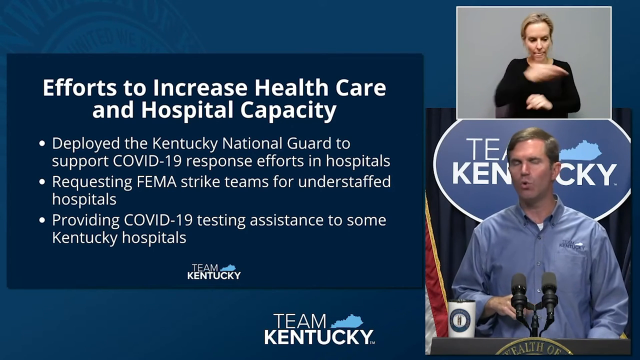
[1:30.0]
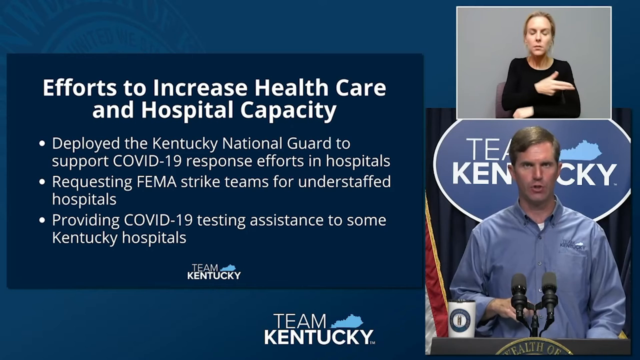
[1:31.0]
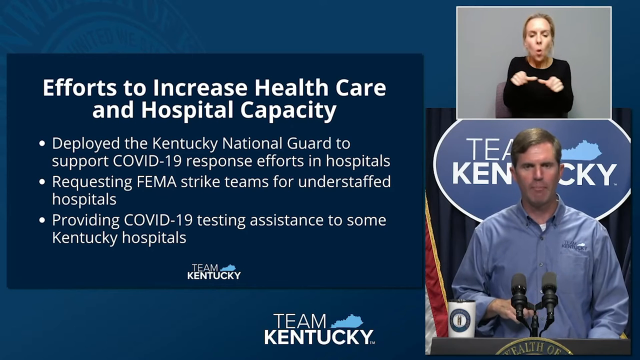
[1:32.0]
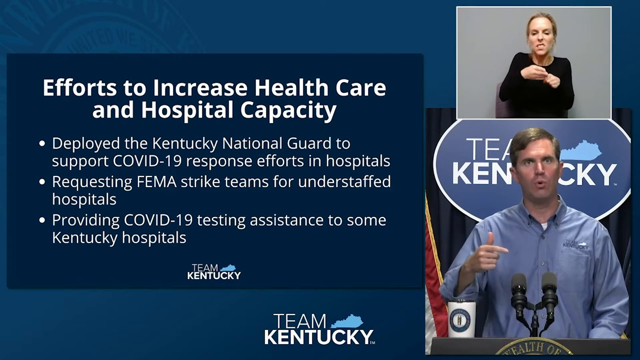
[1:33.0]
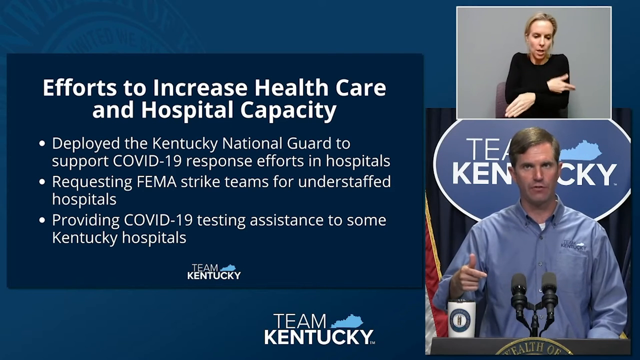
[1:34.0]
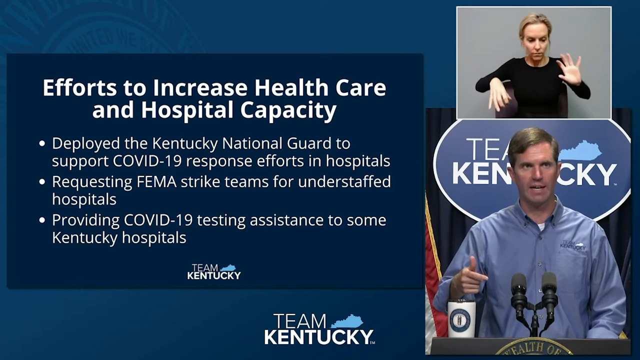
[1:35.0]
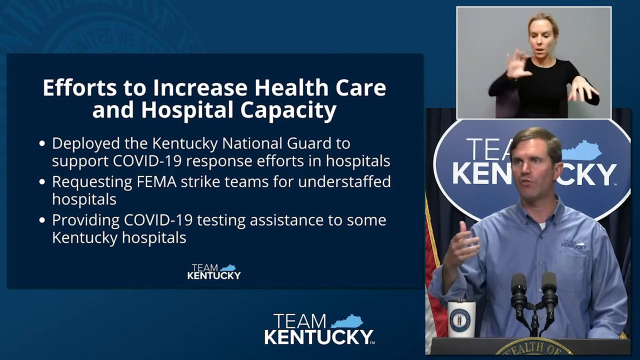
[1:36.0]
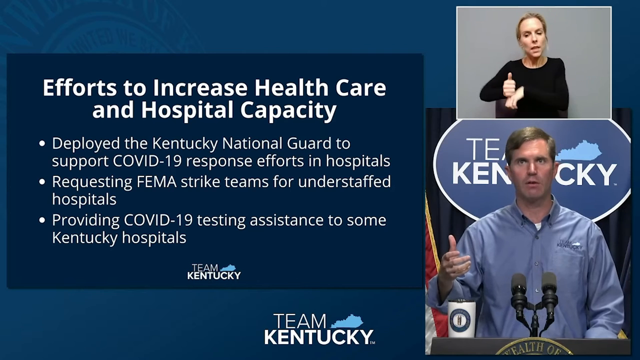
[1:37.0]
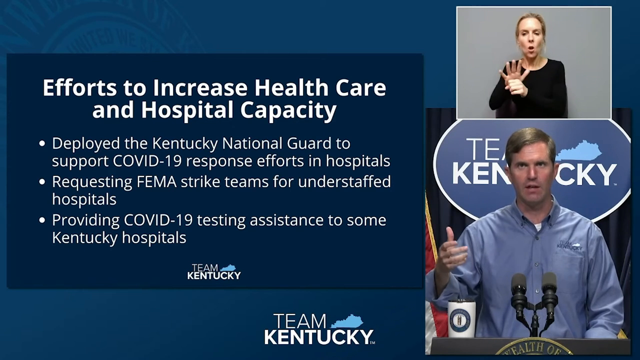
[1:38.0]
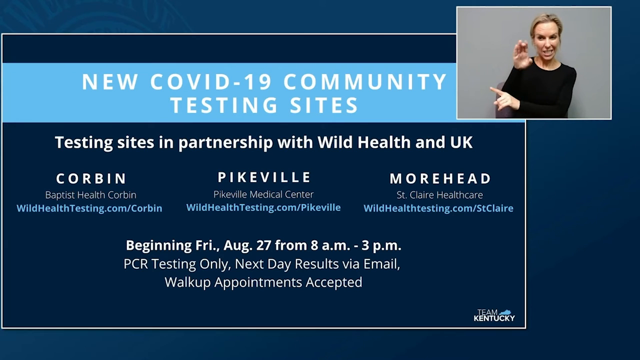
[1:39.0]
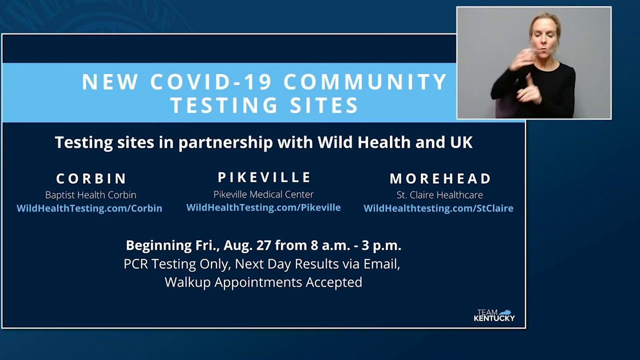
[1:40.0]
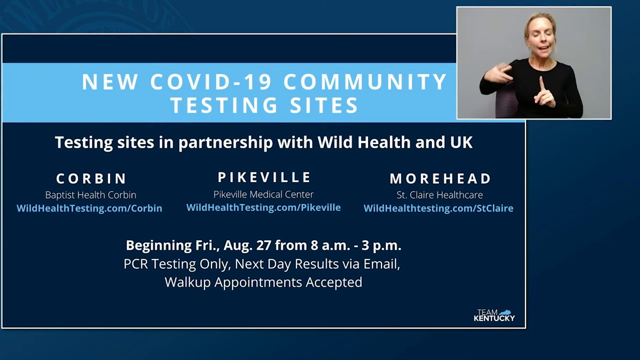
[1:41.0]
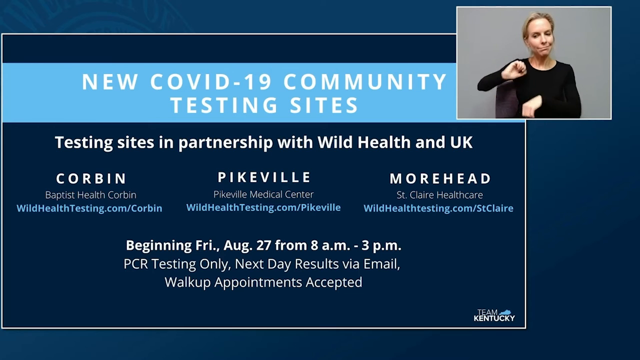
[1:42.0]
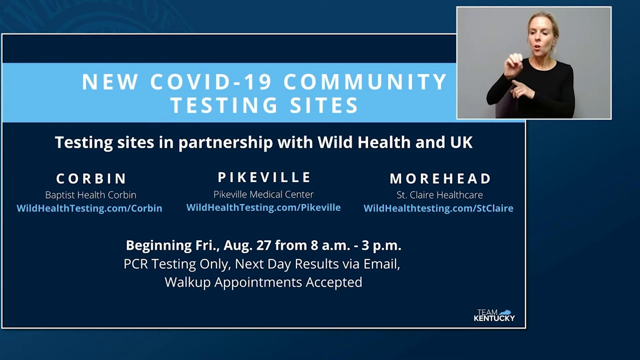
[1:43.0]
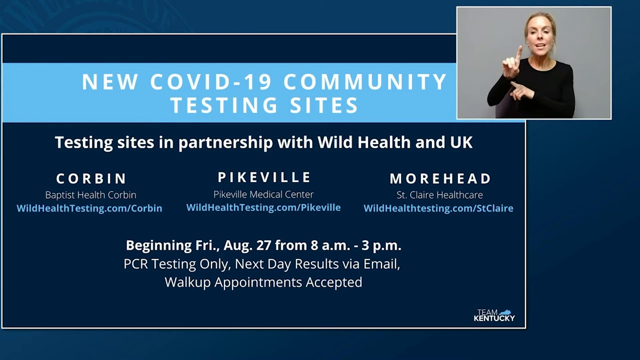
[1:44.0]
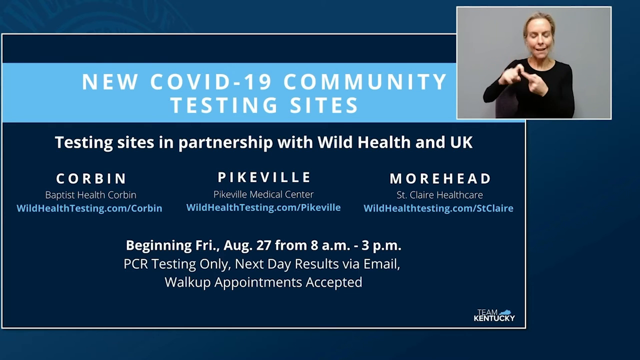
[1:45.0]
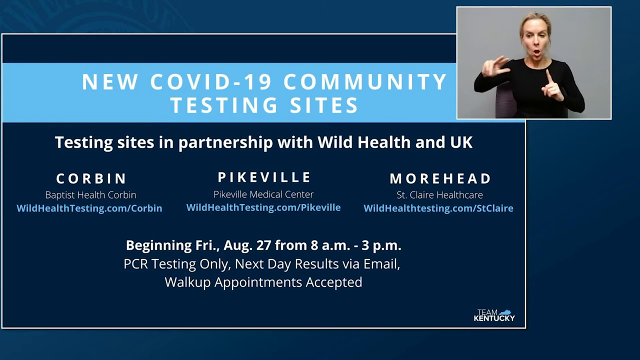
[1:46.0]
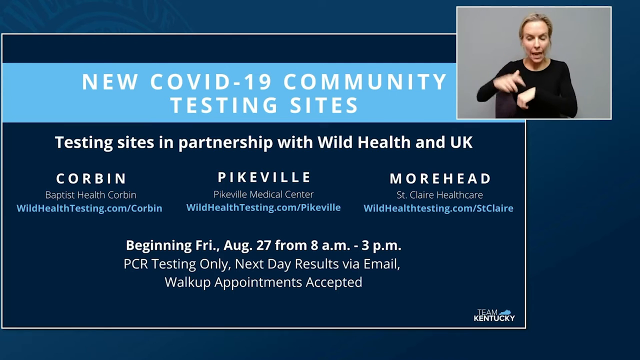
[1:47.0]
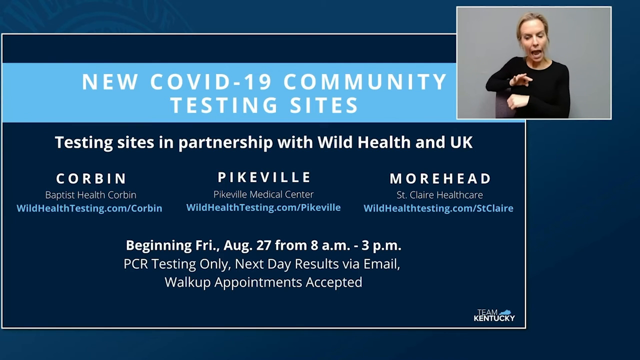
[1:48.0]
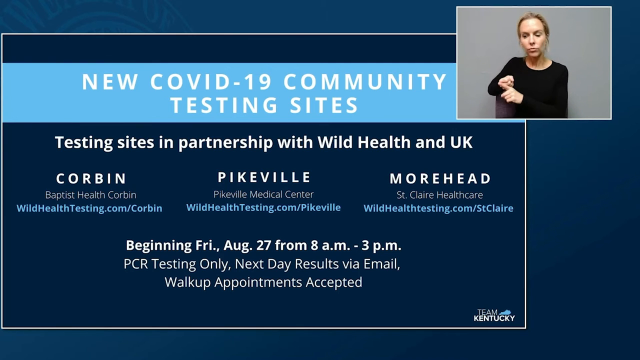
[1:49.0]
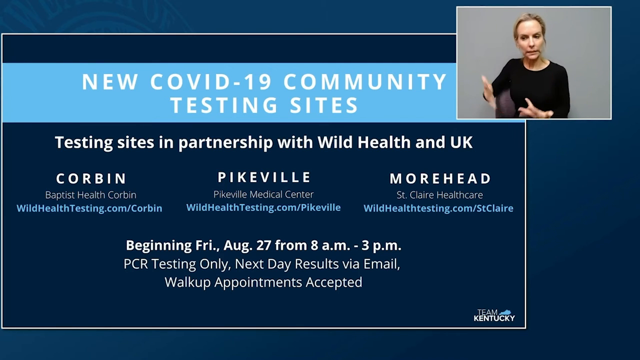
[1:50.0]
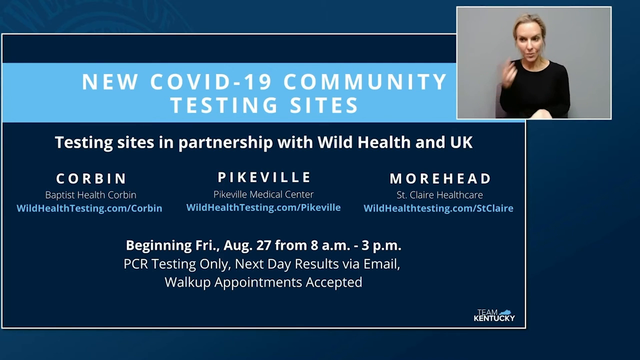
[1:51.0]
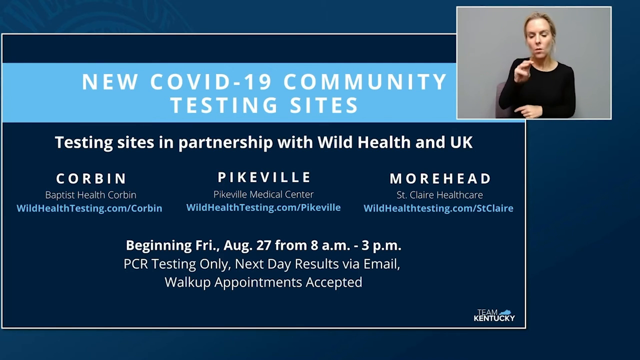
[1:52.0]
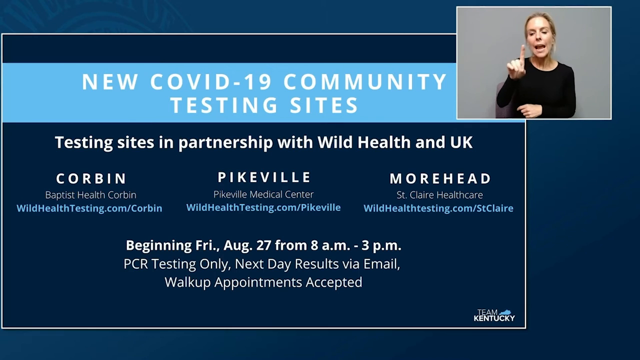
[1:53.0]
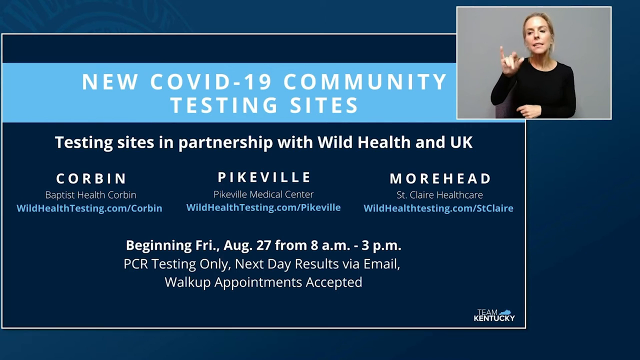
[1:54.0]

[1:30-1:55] At a press conference in the state of Kentucky, a governor or spokesperson is in the lower right-hand corner, while in the upper right-hand corner a woman translates into sign language for those who are deaf or hard of hearing. She wears a black shirt that lets her hands be seen clearly, and she is blonde with her hair pulled back behind her head. The topic is new COVID-19 community testing sites. The screen says "testing sites are in partnership with Wild Health and UK" and lists three testing sites: Corbin, Baptist Health Care, Corbin; one in Pikesville, Pikeville Medical Center; and one in Moorhead, St. Clair Health Care. At the bottom it says "beginning Friday August 27th from 8 a.m. to 3 p.m.", "PCR testing only", "Next day results via email" and "Walk-up appointments accepted."